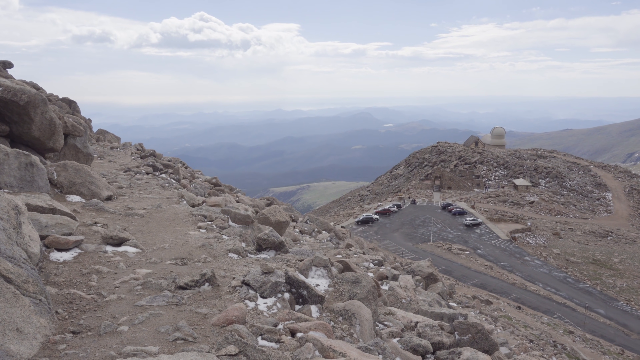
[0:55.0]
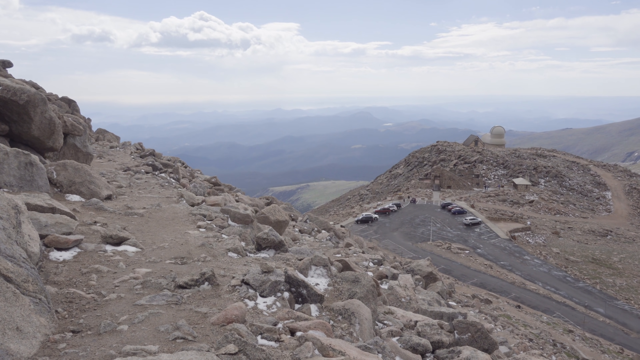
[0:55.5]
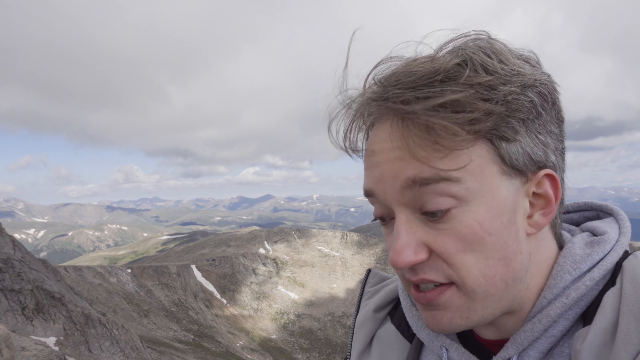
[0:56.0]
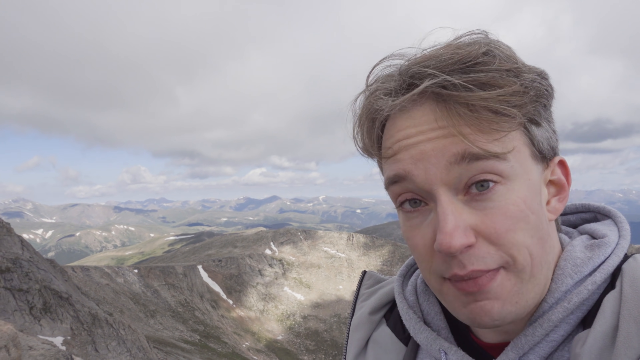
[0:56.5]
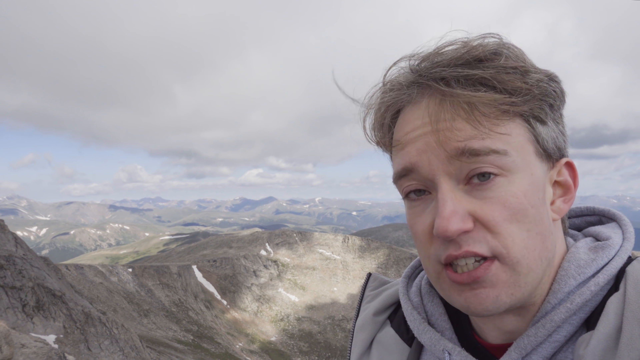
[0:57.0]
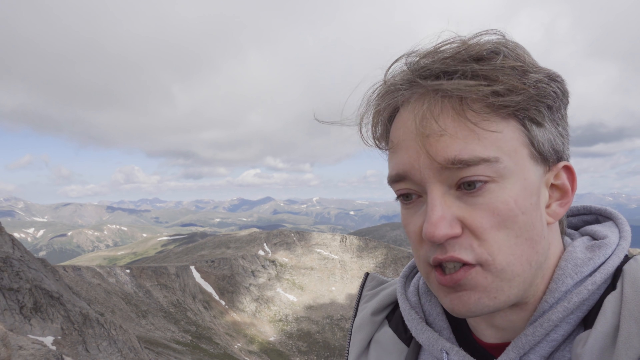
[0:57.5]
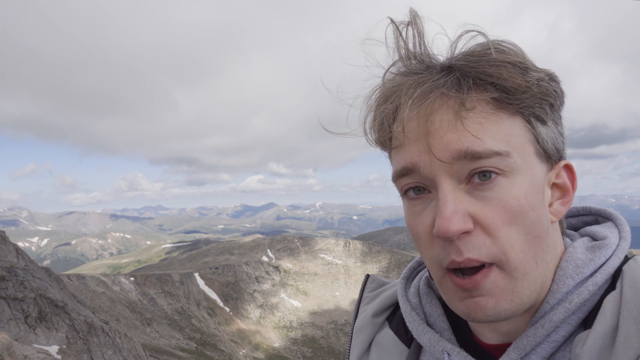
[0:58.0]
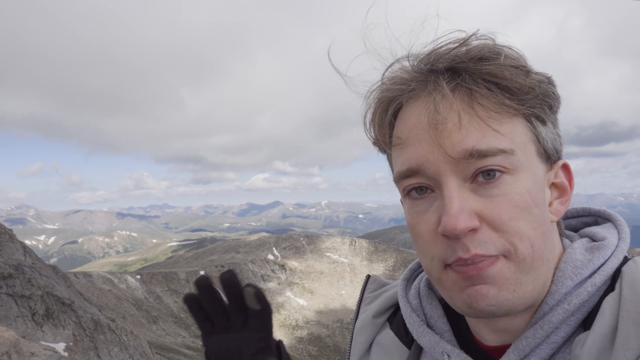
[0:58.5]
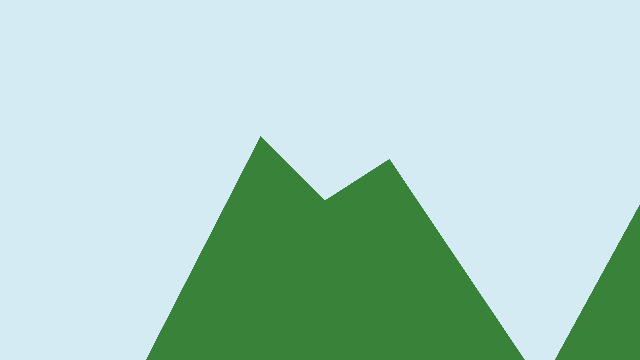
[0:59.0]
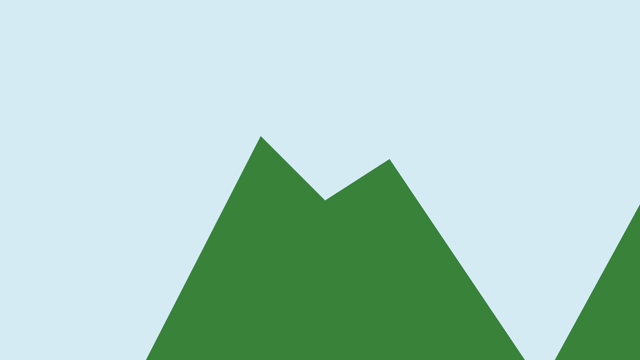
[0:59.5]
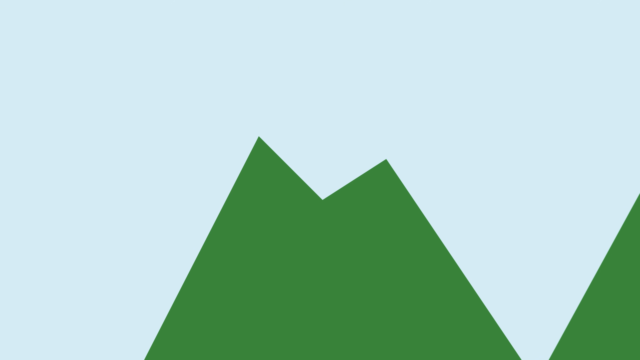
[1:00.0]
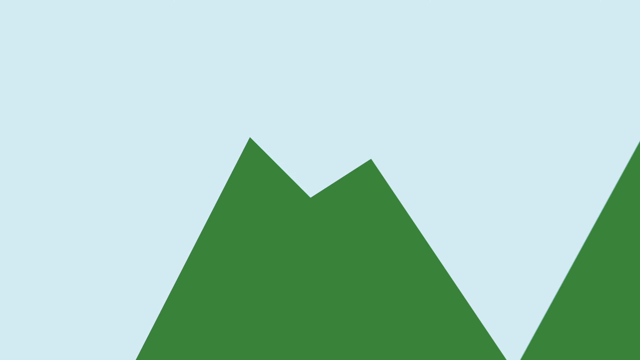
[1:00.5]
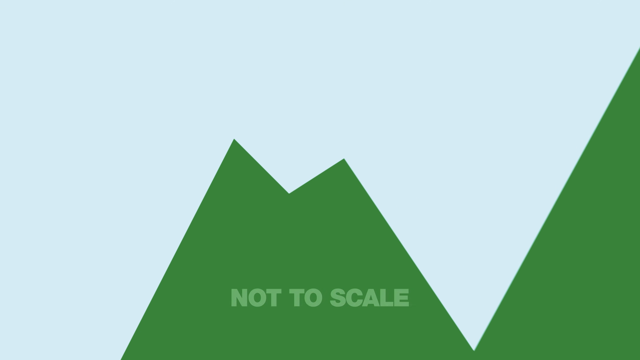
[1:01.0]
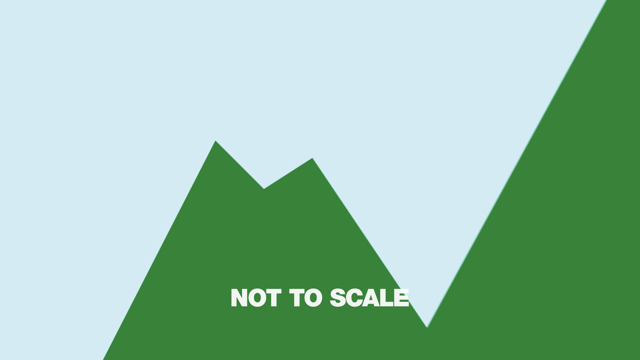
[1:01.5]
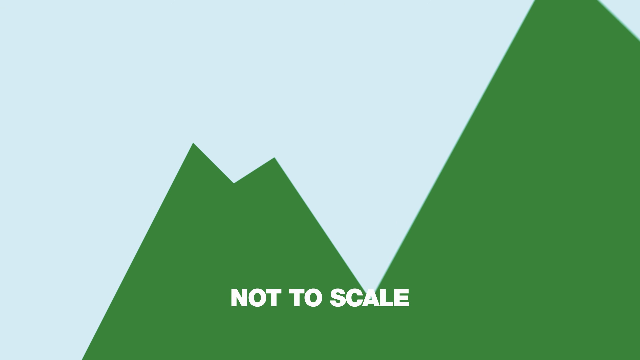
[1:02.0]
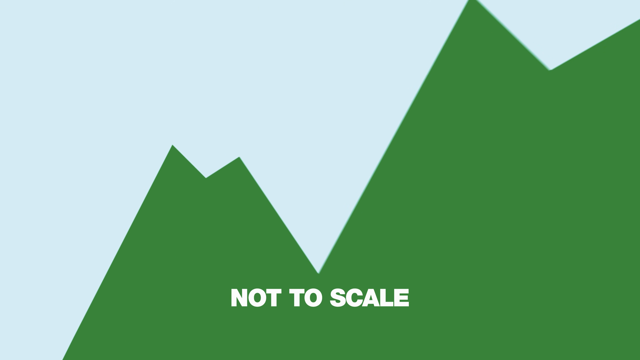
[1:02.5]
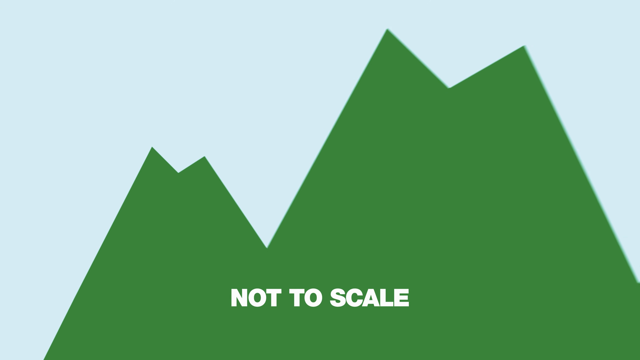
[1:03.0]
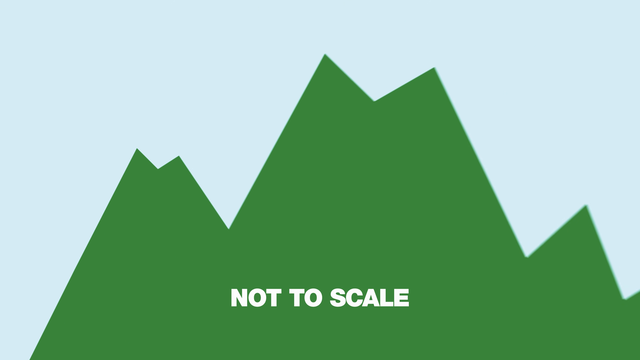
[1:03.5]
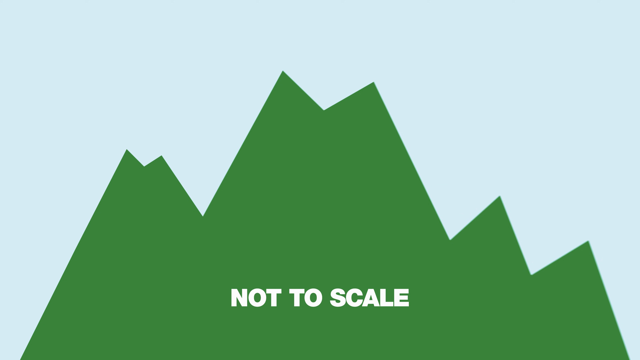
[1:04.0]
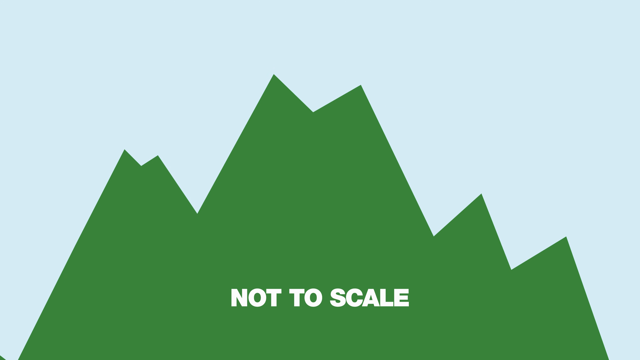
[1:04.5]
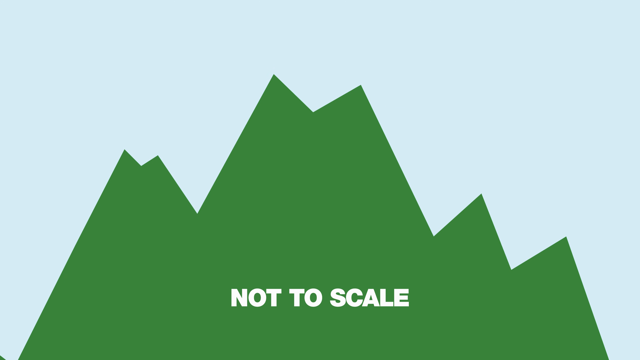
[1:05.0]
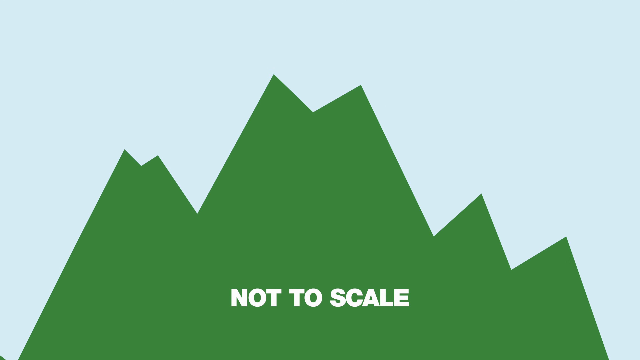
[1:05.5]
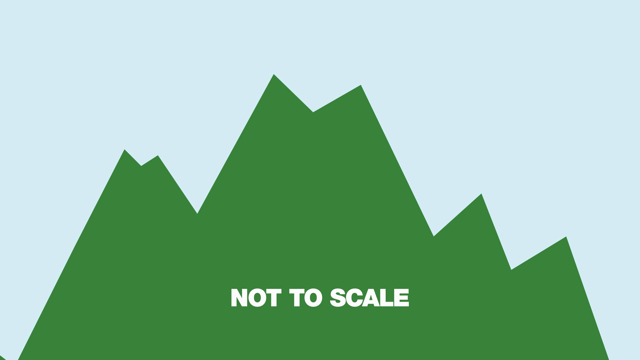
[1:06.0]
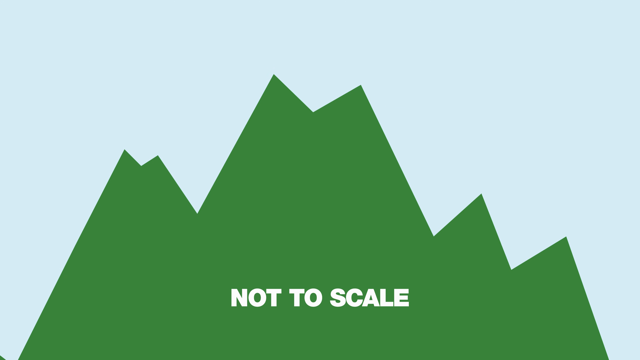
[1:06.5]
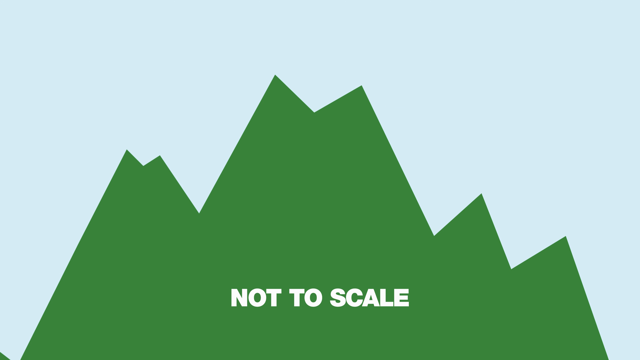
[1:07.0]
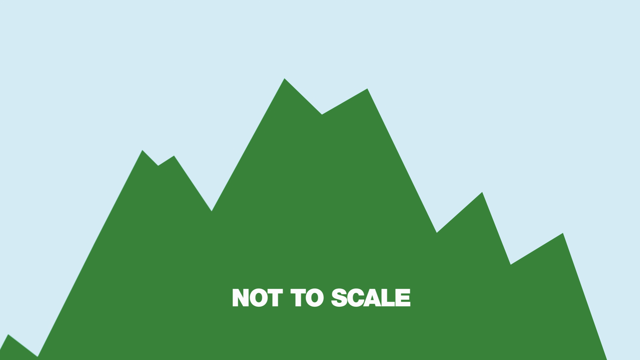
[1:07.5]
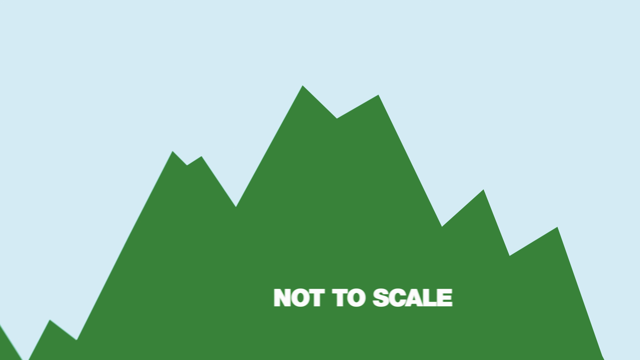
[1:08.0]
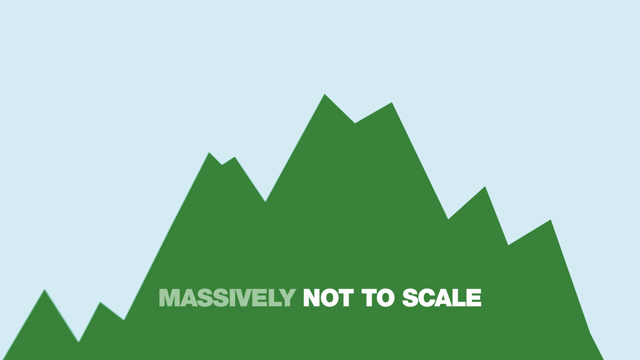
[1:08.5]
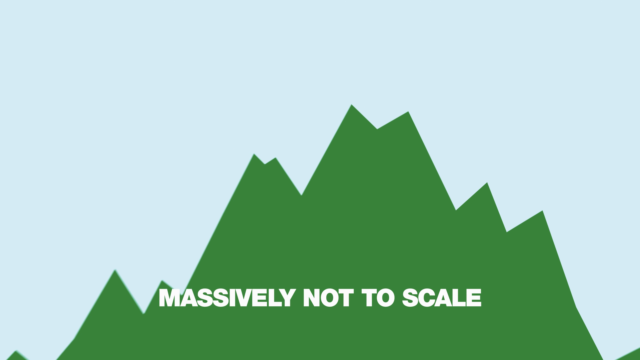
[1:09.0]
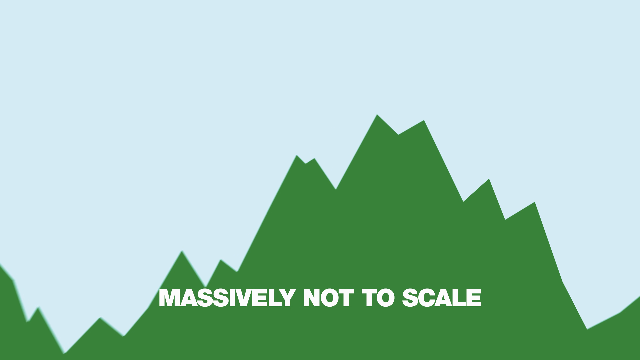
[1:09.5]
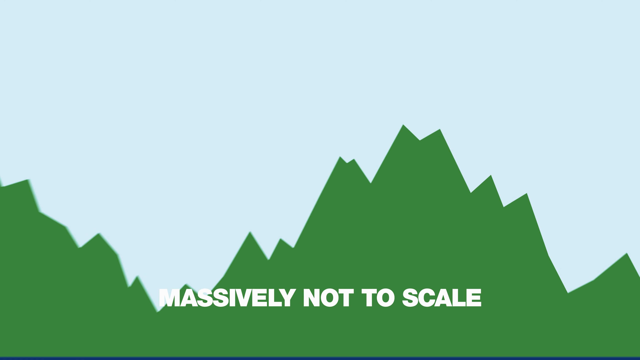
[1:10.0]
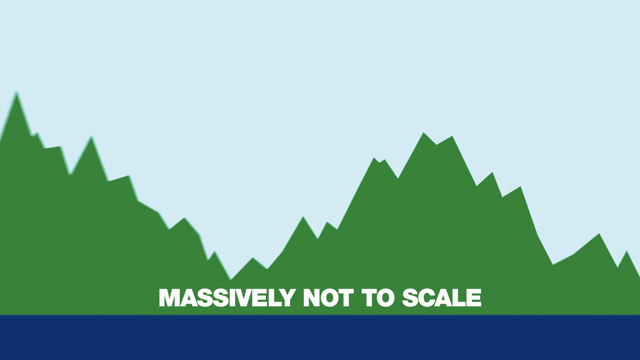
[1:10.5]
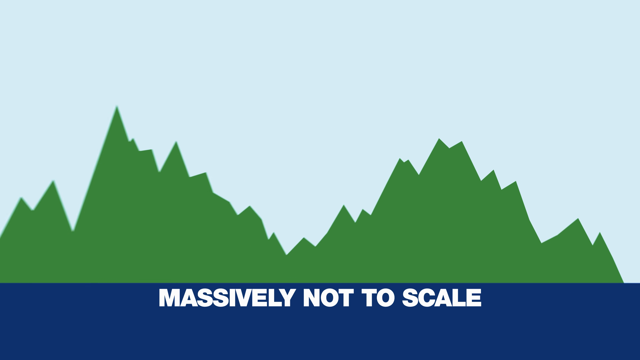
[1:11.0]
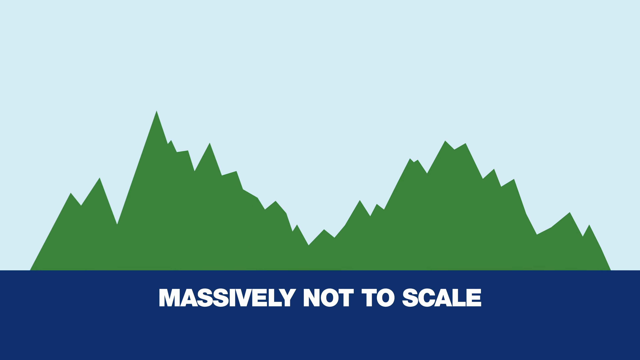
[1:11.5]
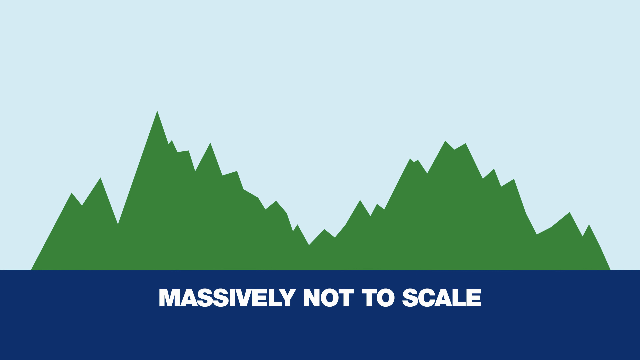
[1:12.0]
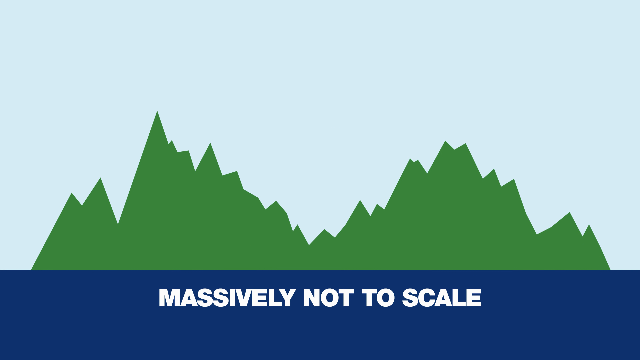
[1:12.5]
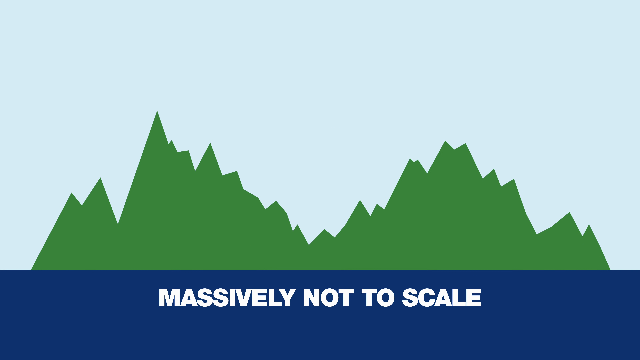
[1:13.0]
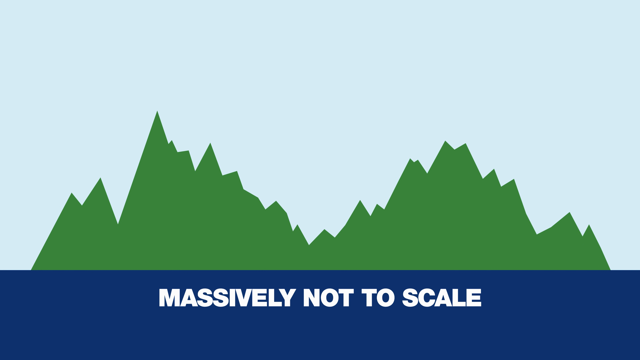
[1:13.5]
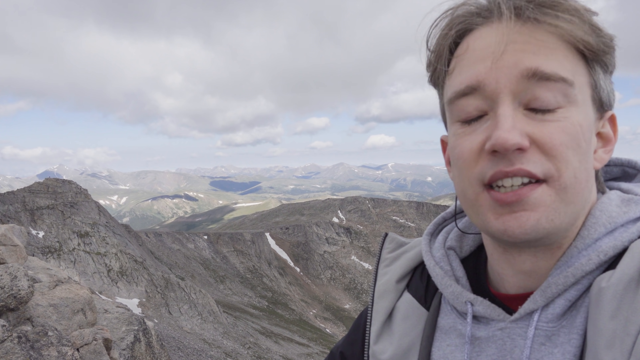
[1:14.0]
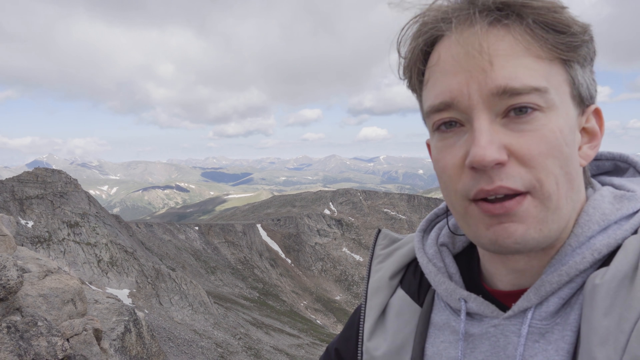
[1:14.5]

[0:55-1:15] The man is still speaking to the camera. The shot cuts to a graph of some sort: a cartoon image of a green mountain on a light blue background, appearing to be the shape of the mountains he is describing. White text on the graph reads "not to scale" and slowly changes to "massively not to scale". The bottom of the graph is dark blue, and the graph has many rigid ups and downs; it appears to be a massive graph of the mountains. A quick shot shows the buildings from earlier, where numerous tourists parked to explore.